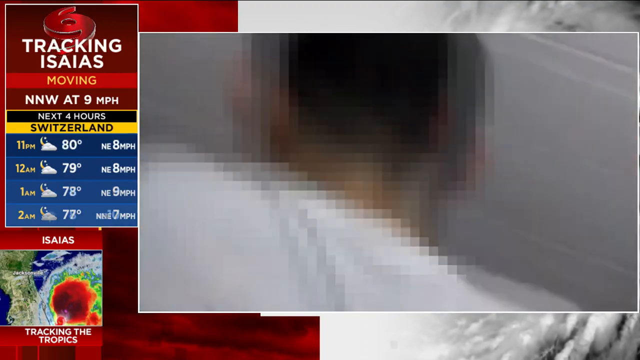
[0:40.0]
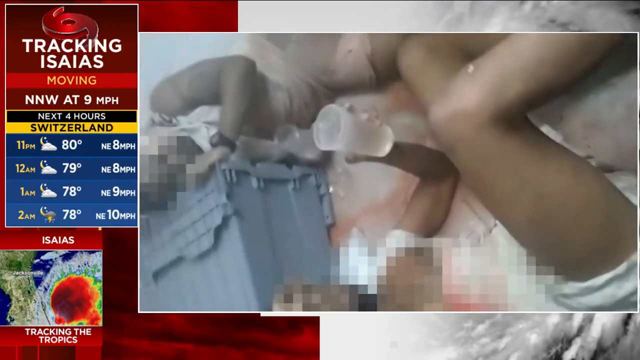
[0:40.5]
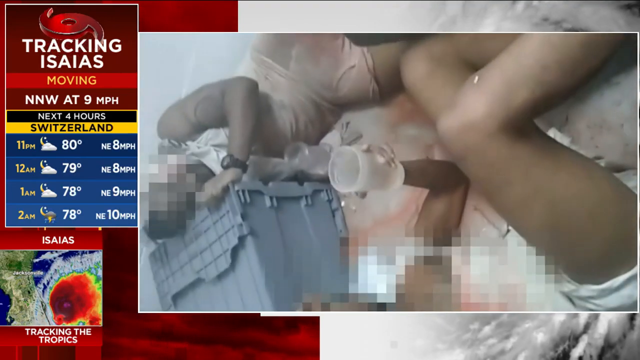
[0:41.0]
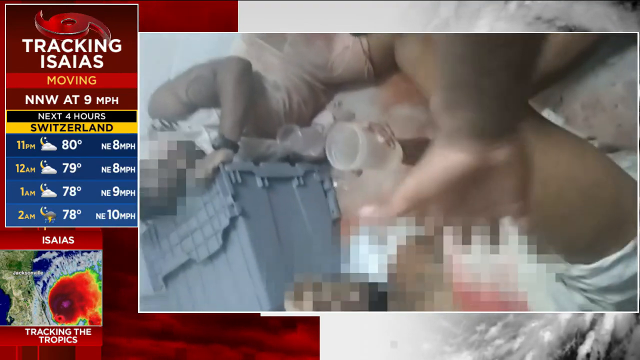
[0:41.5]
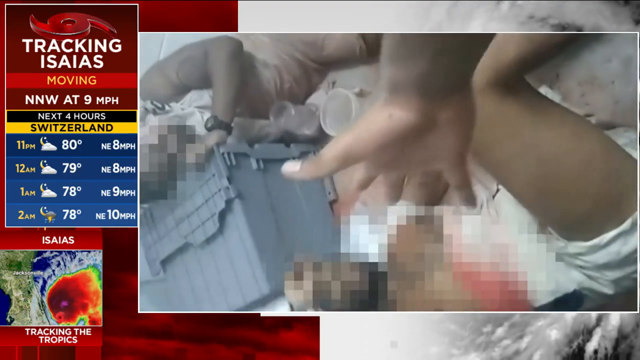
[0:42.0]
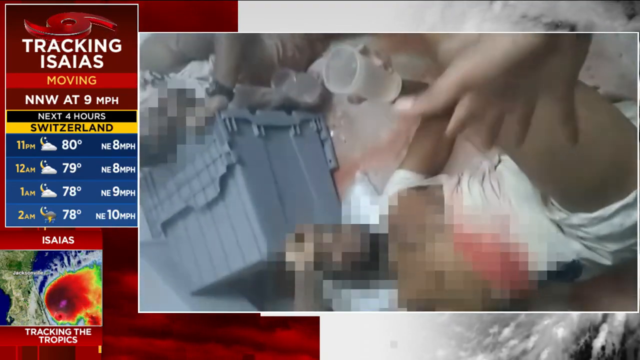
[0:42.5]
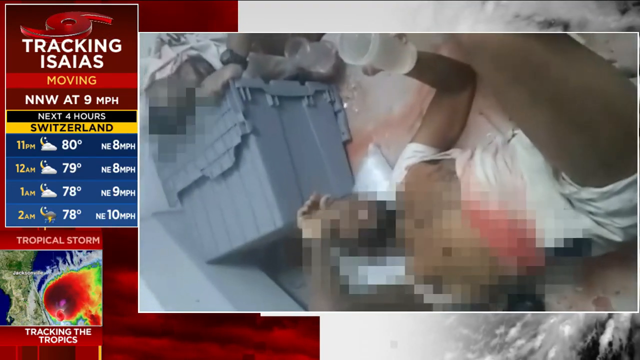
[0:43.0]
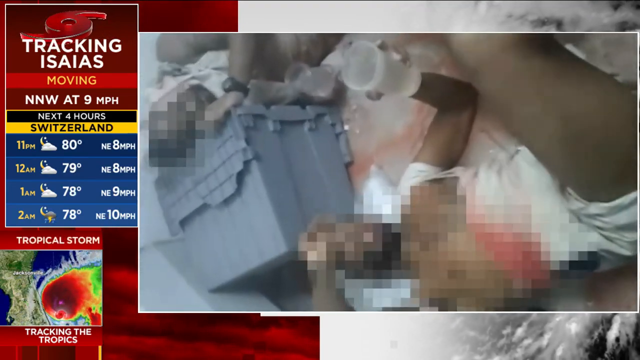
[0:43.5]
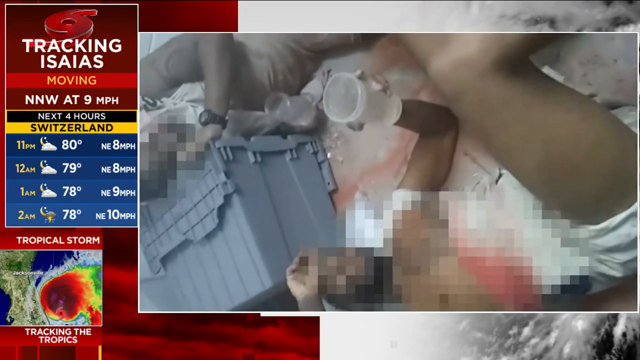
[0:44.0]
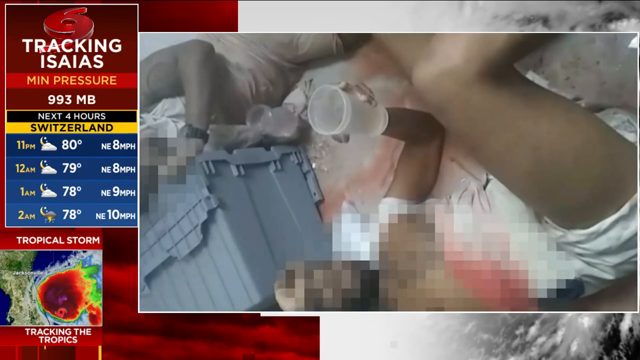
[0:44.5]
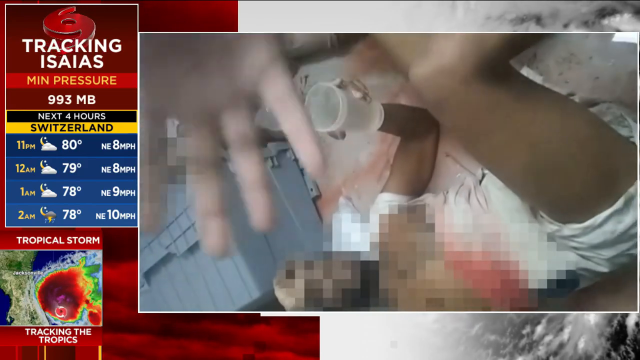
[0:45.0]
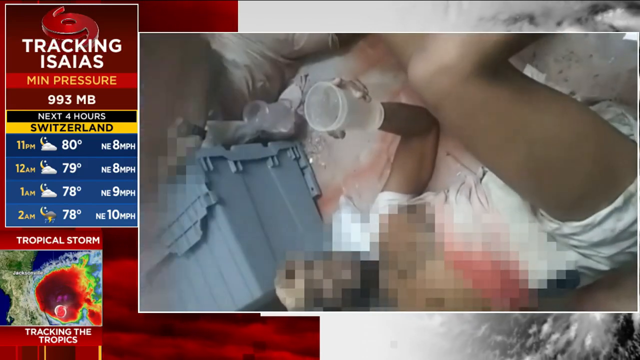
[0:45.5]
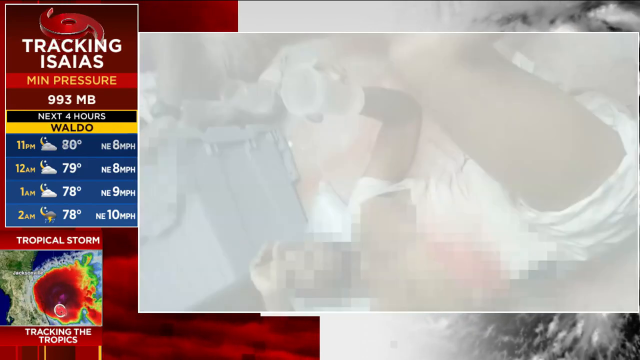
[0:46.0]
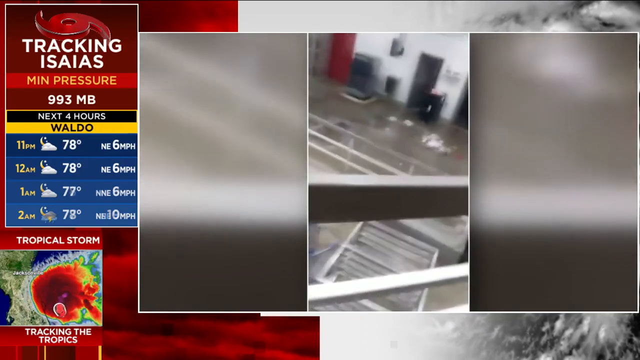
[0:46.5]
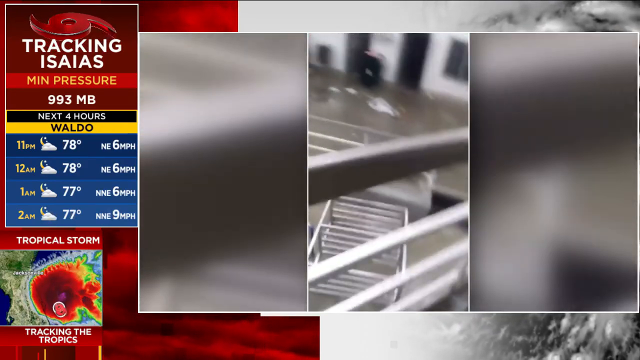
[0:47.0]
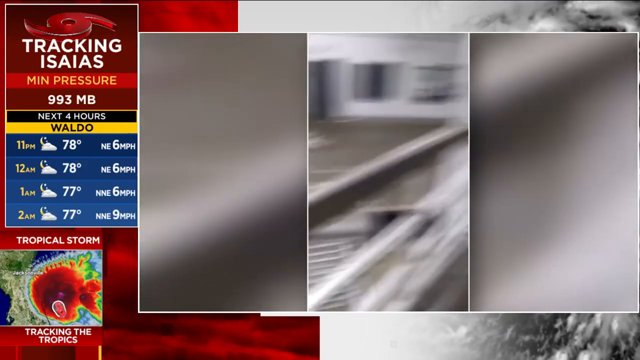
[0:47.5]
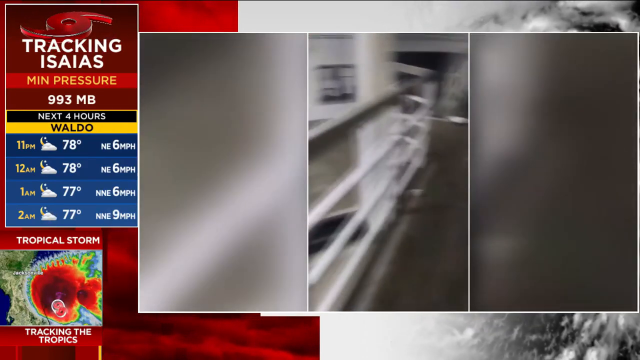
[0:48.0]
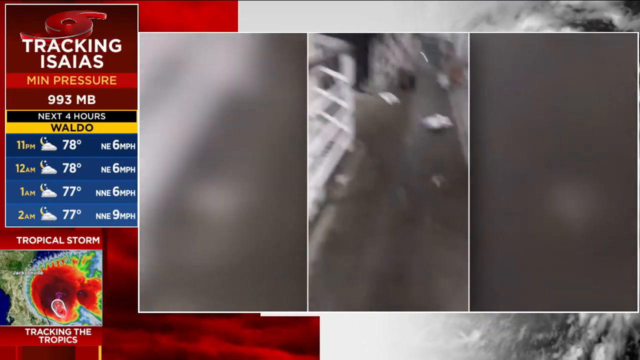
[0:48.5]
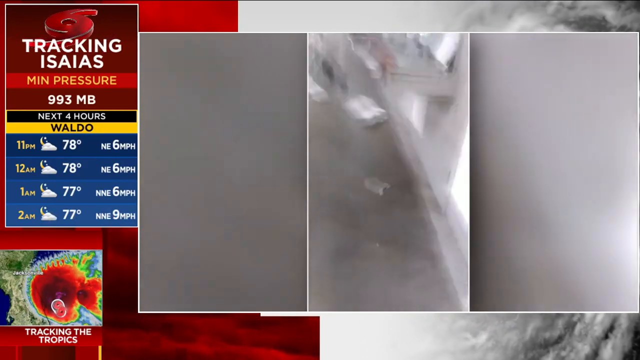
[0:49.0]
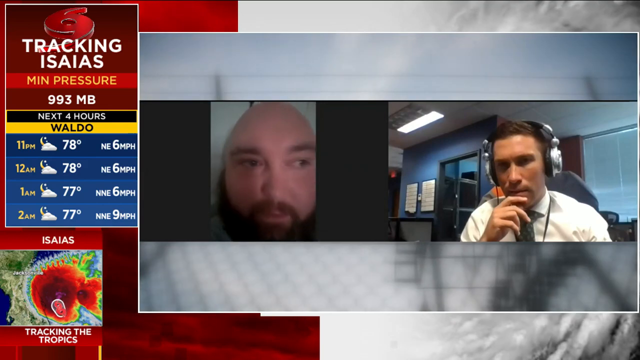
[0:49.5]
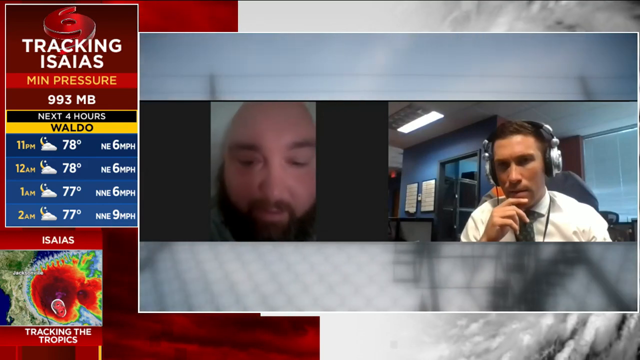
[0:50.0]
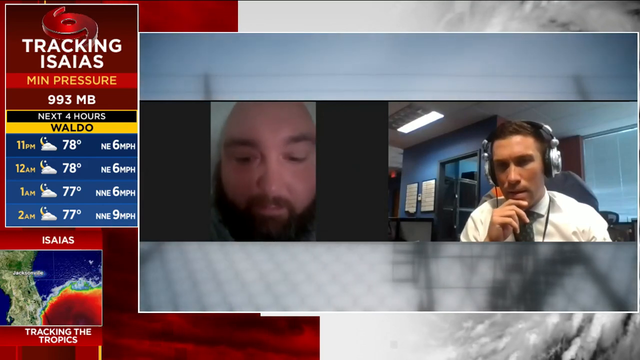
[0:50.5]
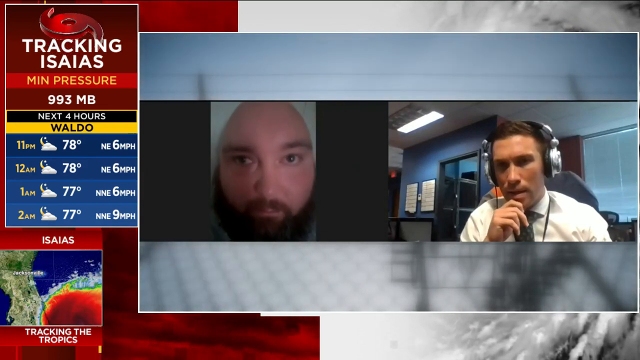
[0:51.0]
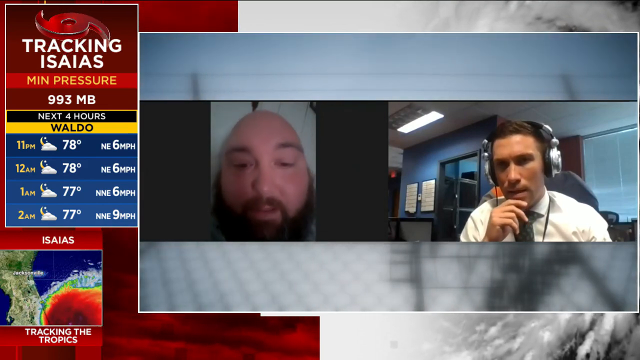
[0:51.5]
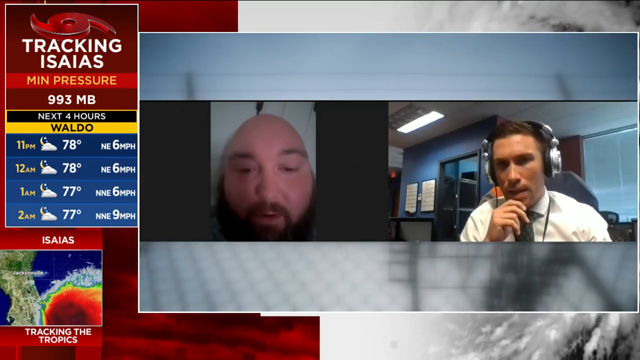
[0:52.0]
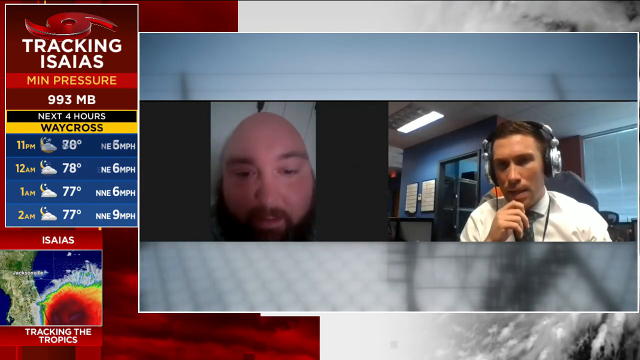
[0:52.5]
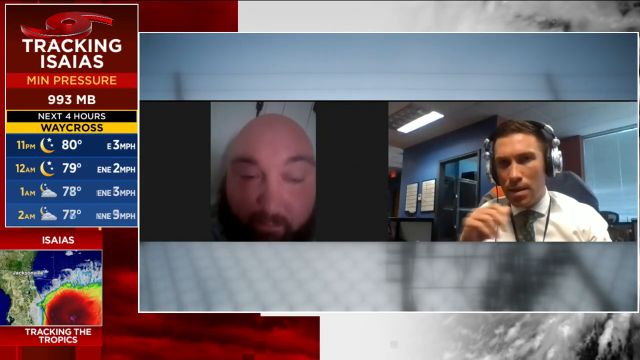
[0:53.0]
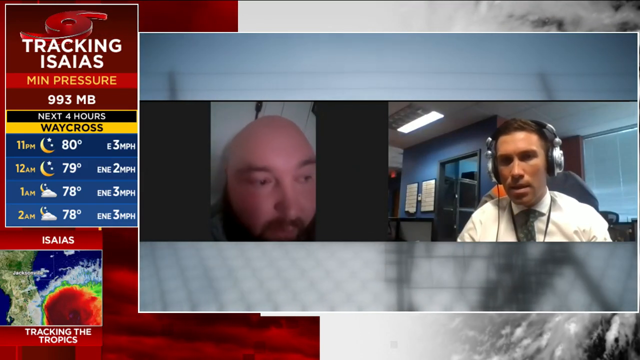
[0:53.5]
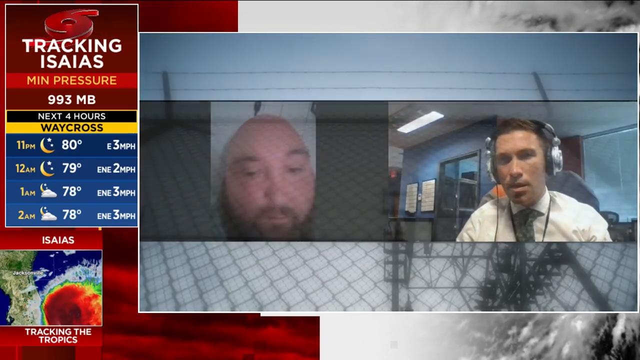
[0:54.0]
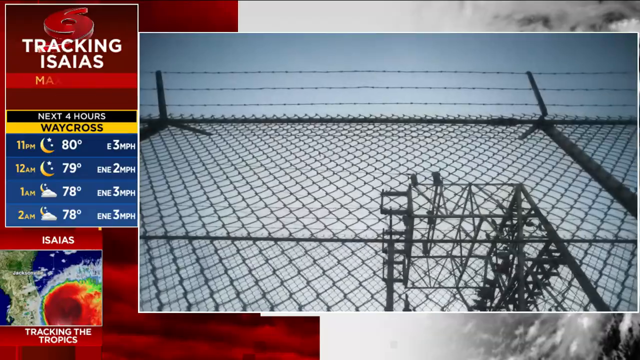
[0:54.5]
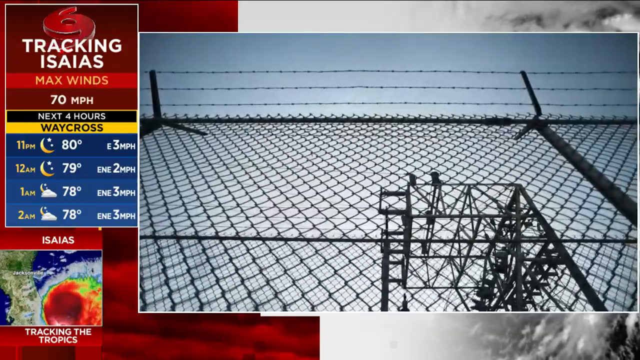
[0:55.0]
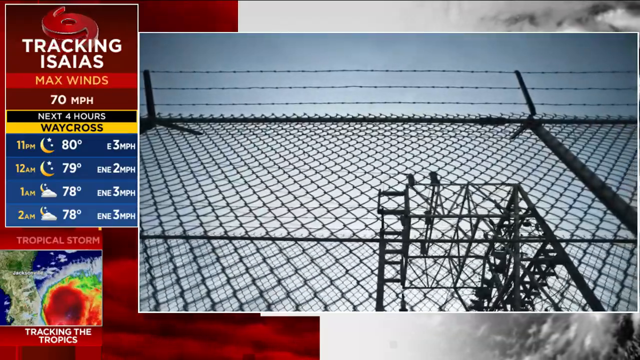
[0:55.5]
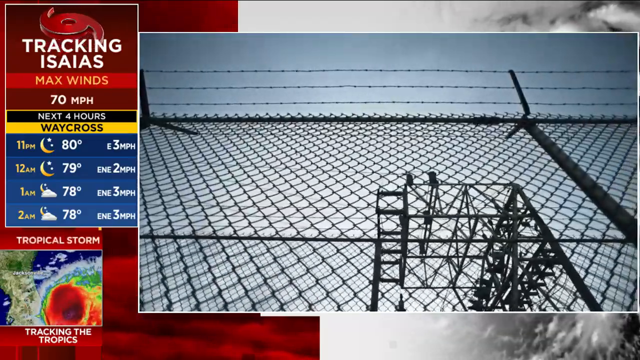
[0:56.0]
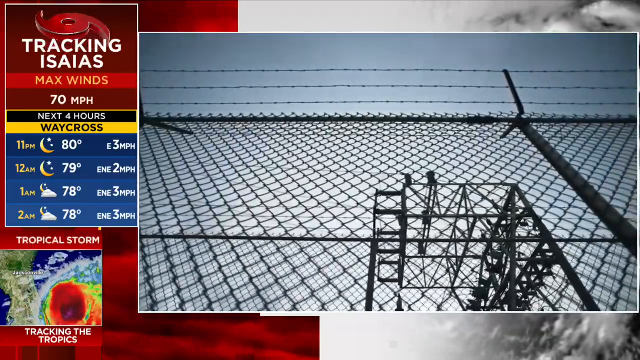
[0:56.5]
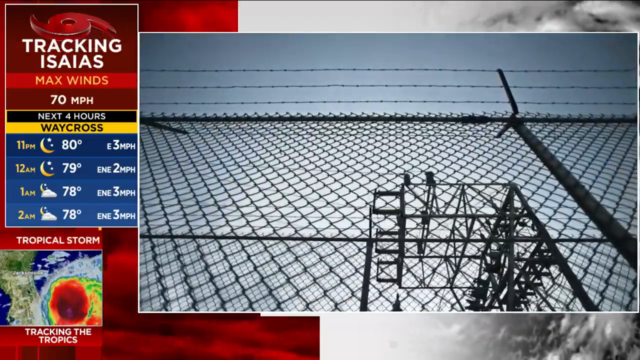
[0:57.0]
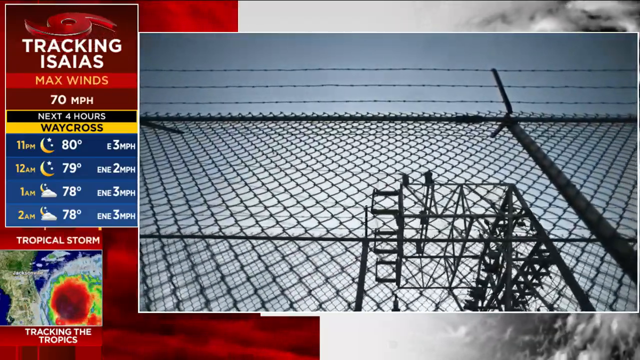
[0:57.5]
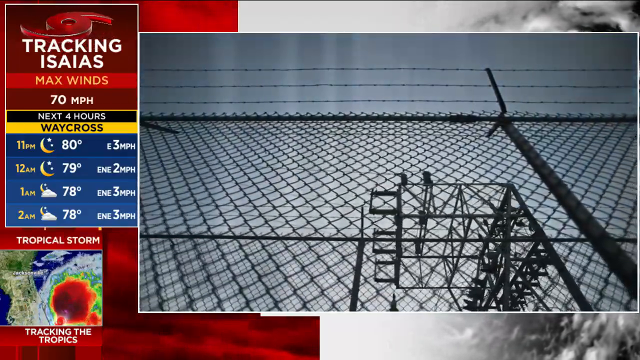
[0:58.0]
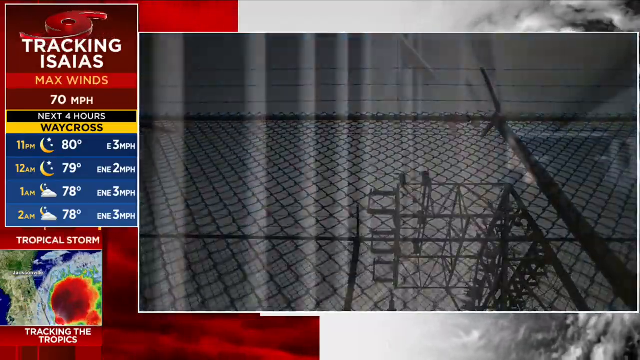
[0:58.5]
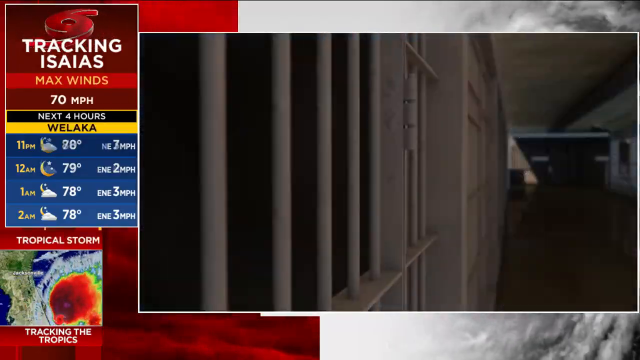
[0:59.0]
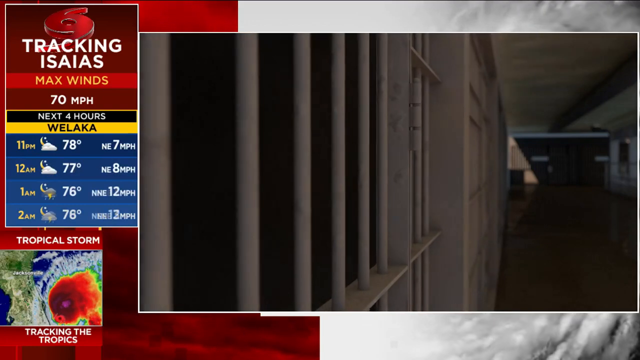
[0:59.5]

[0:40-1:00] A man's neck is visible in a white shirt; he has brown hair and light skin. The video cuts to a group of people in a room. There are two men; one is holding a cup. He is lying on the ground with one hand over his chest. It then cuts to two people talking, one a man with headphones on his ears and his hand on his chin. A fence is shown, the bars of a prison, with sky above it, so it is outside. In one video there is a box; one of the men is lying on what looks like a tote. Garbage is visible on the ground of the prison cells. The person holding the camera has his hands extended, and the footage moves very fast. Back at the prison, it is basically trashed, with a lot of litter on the floor. In the room there are two cups. One man in a white shirt, wearing just white, lies on the ground with his face blurred out, his hands slightly blurred, and his leg extended. Another man is on a blue, bluish-gray tote with his head and one arm on it; his face is blurred out and he wears a black watch.